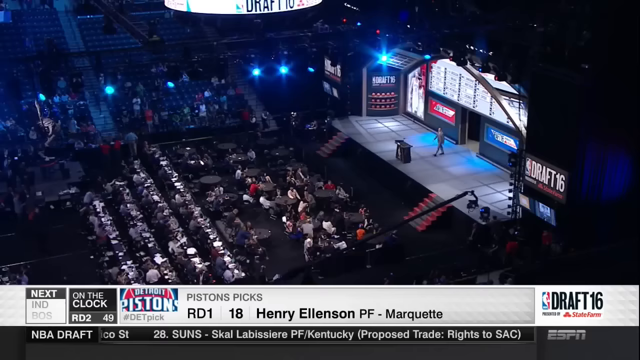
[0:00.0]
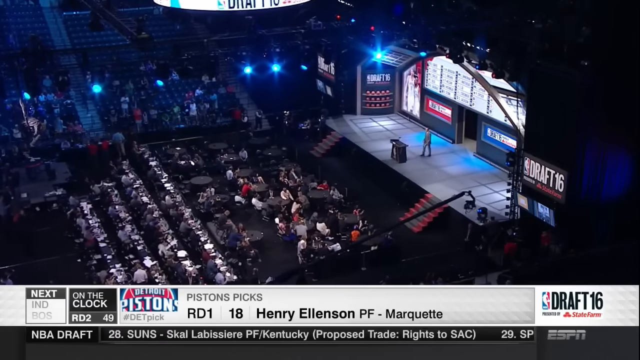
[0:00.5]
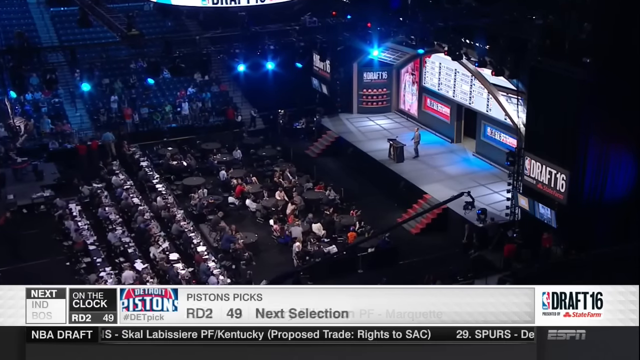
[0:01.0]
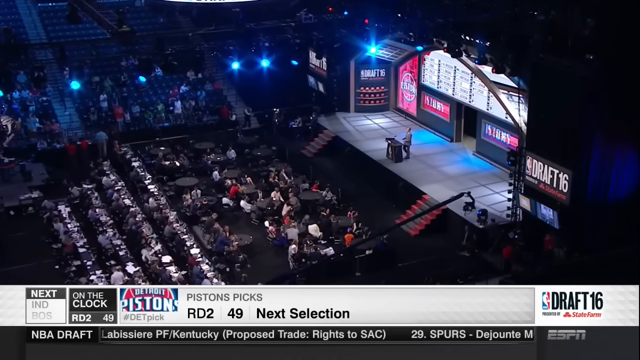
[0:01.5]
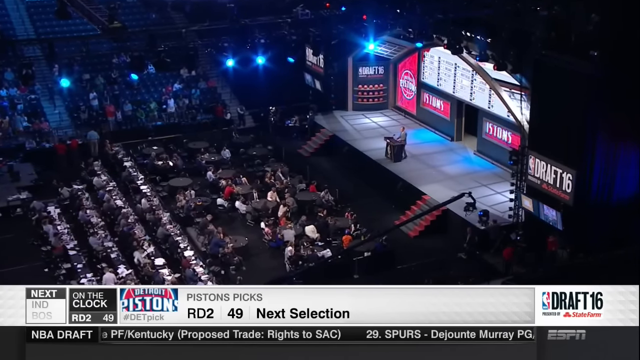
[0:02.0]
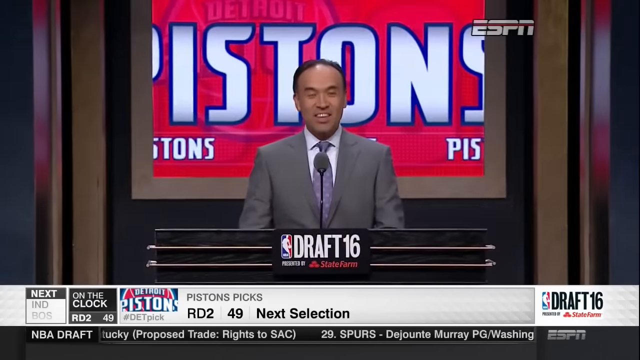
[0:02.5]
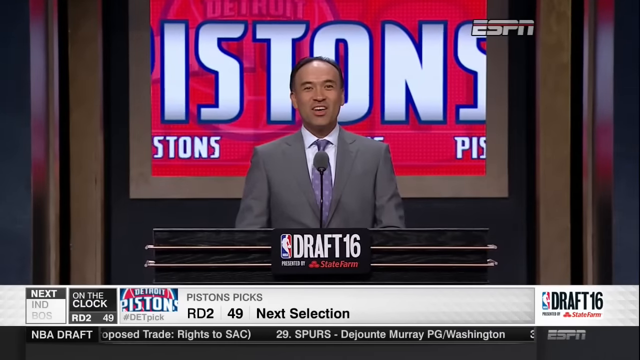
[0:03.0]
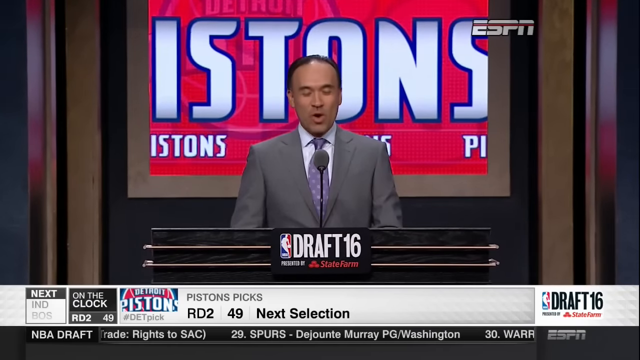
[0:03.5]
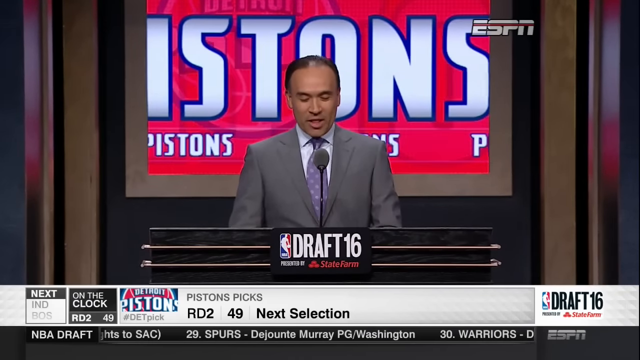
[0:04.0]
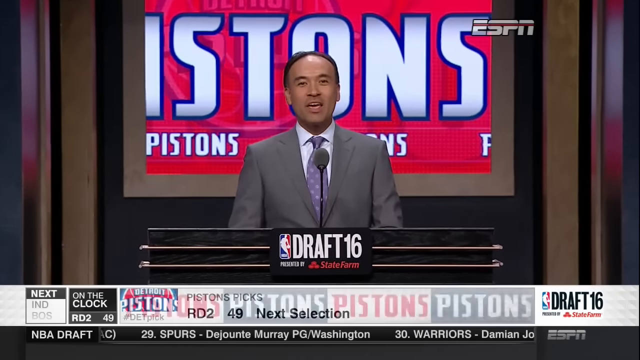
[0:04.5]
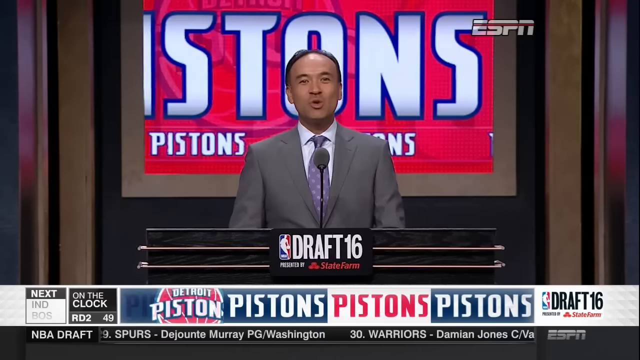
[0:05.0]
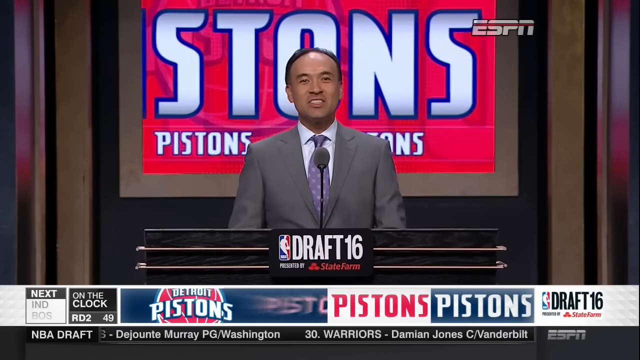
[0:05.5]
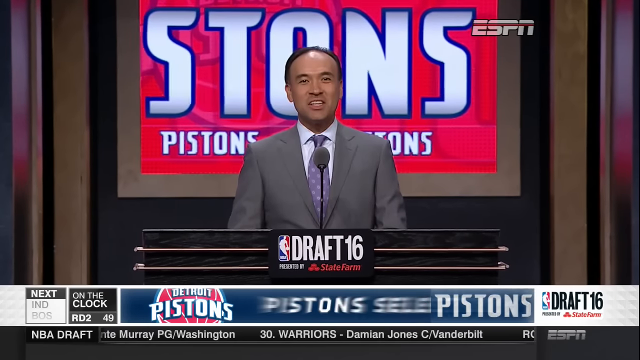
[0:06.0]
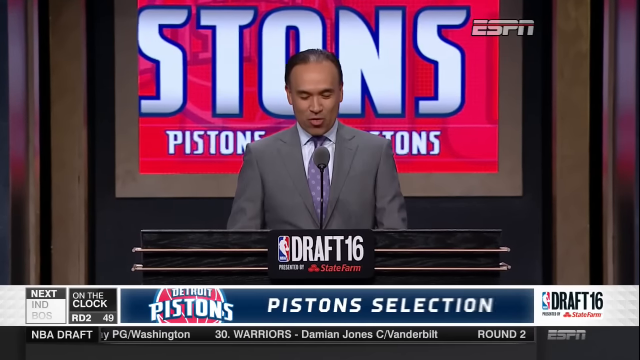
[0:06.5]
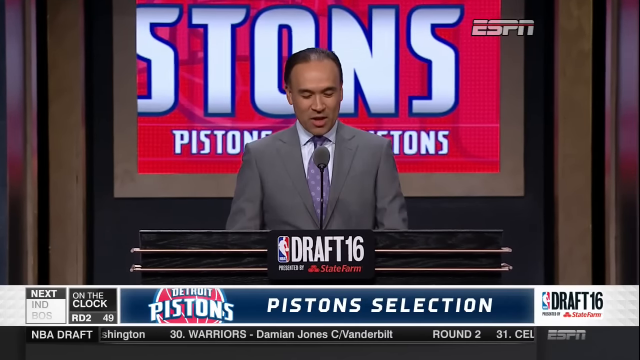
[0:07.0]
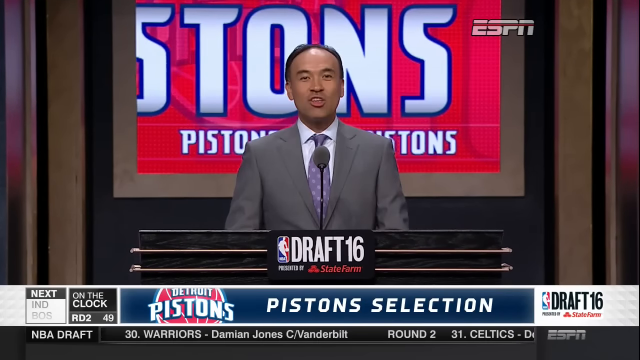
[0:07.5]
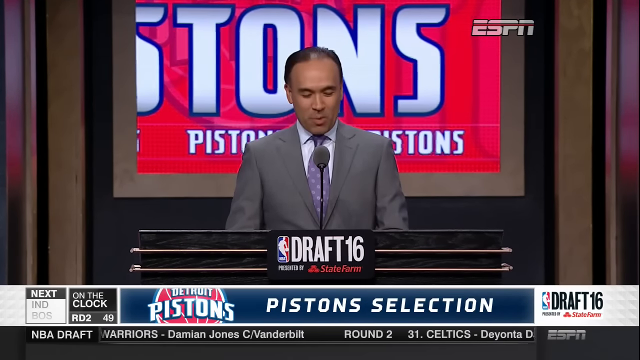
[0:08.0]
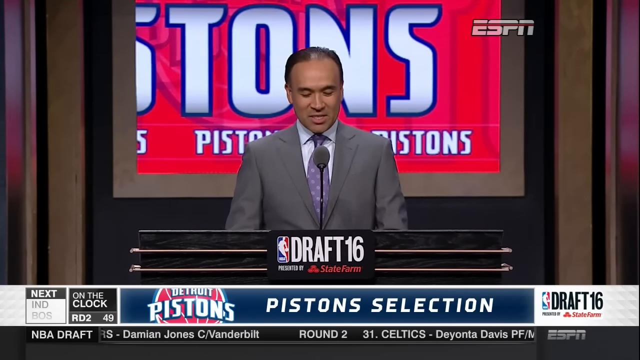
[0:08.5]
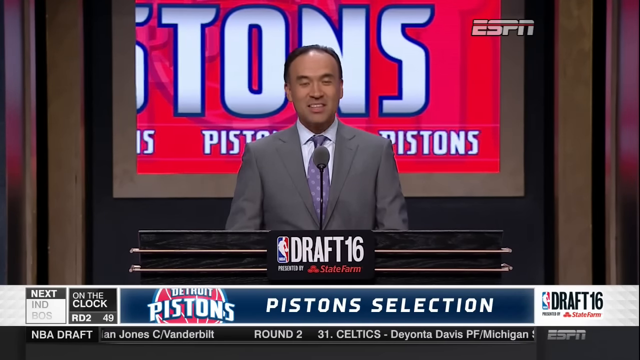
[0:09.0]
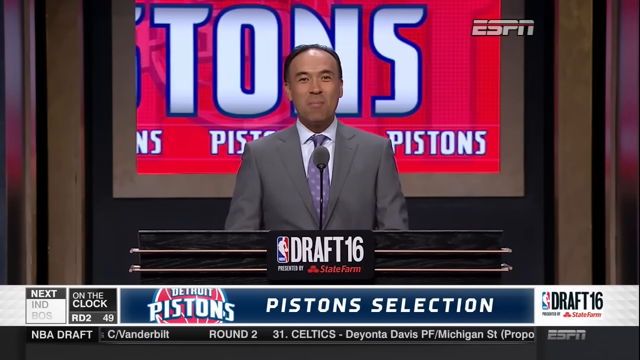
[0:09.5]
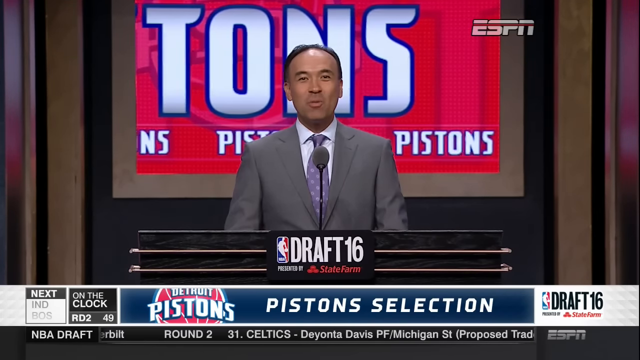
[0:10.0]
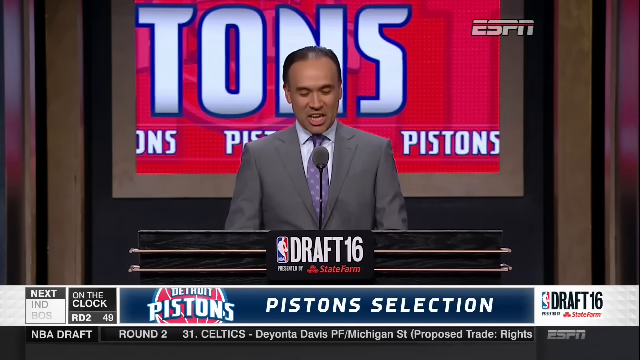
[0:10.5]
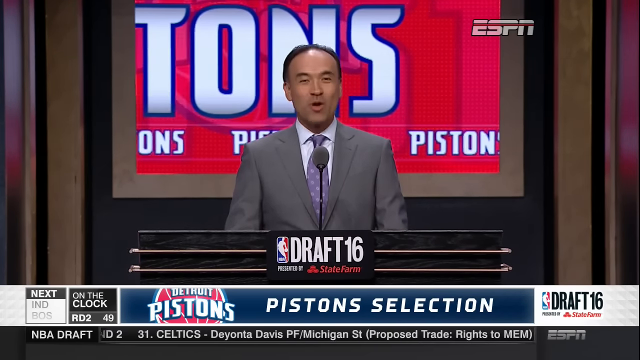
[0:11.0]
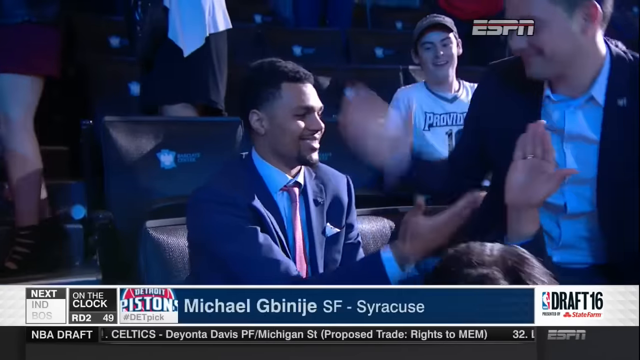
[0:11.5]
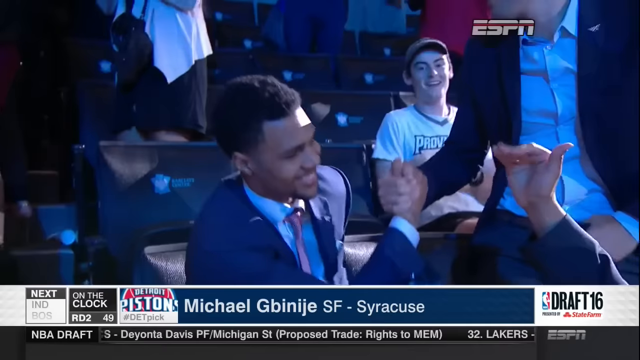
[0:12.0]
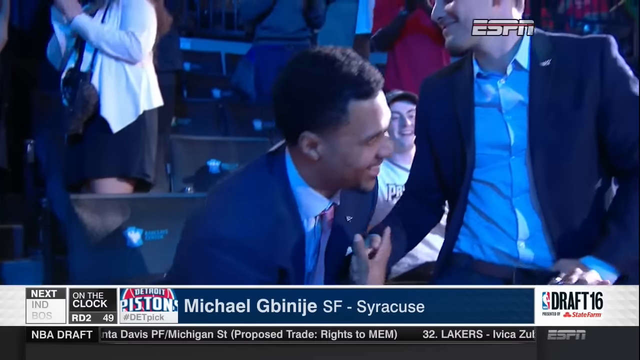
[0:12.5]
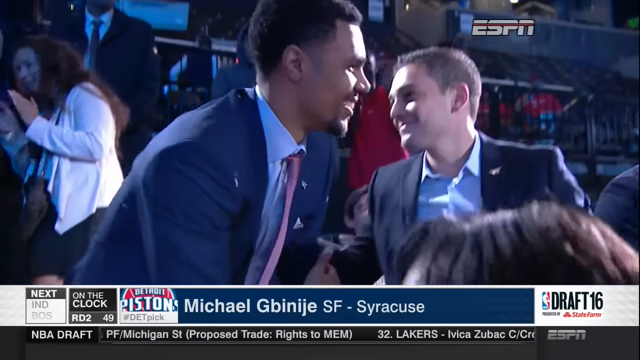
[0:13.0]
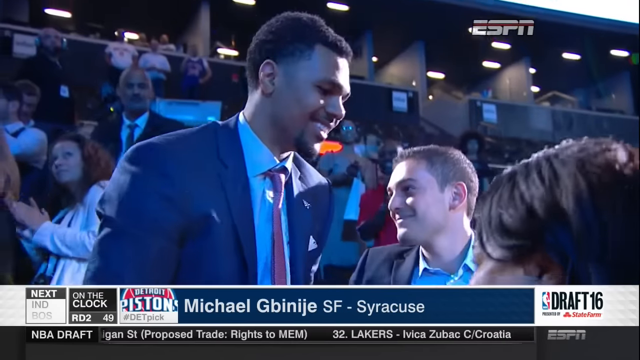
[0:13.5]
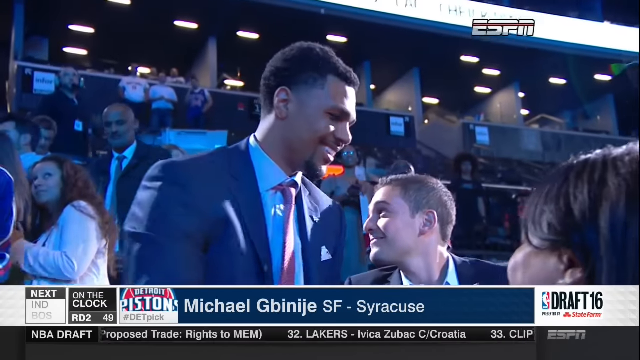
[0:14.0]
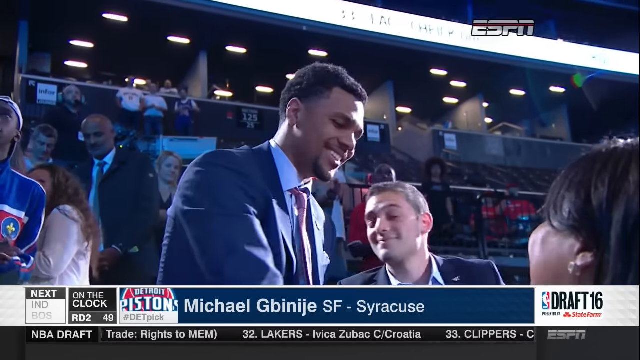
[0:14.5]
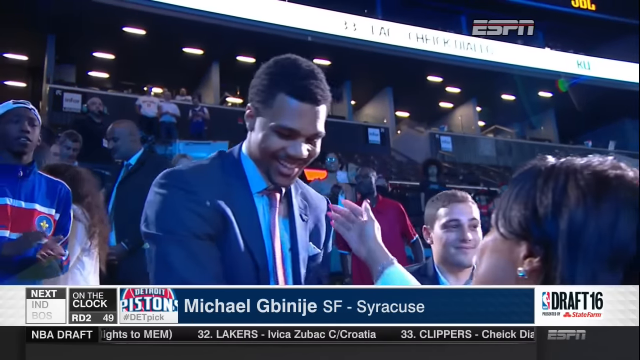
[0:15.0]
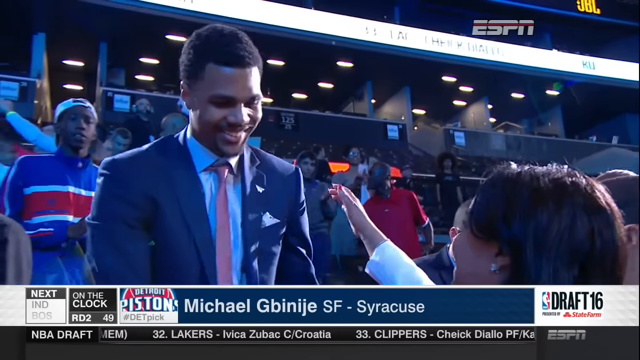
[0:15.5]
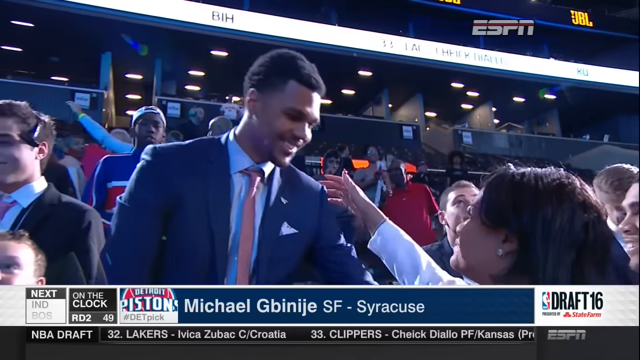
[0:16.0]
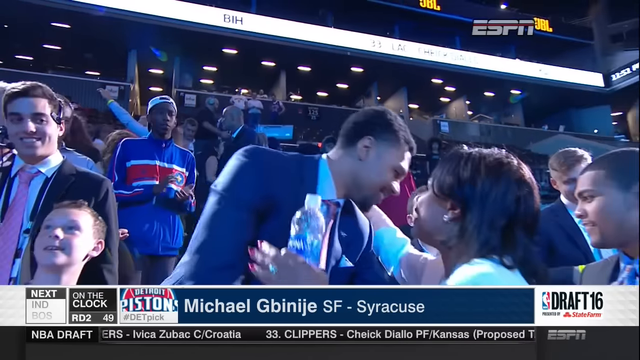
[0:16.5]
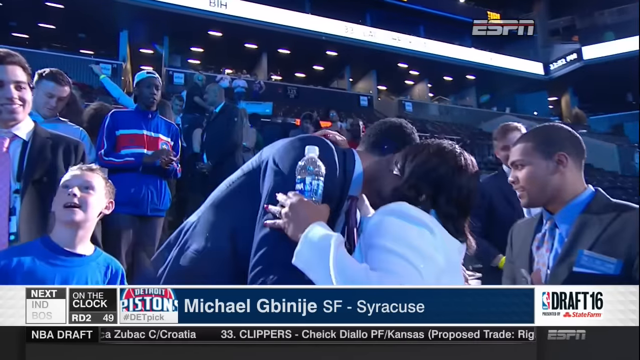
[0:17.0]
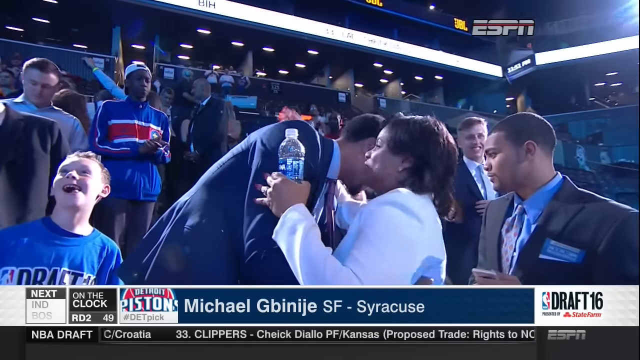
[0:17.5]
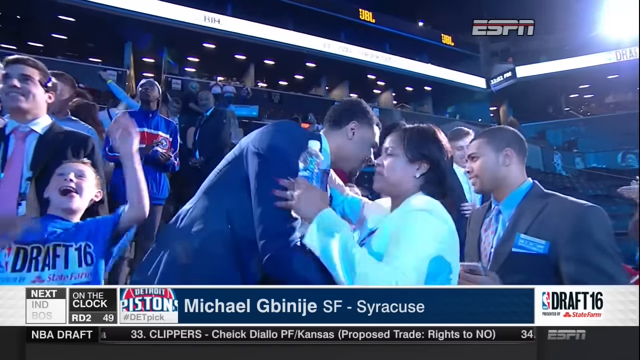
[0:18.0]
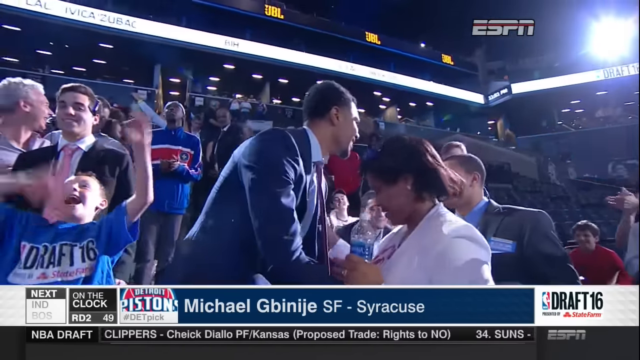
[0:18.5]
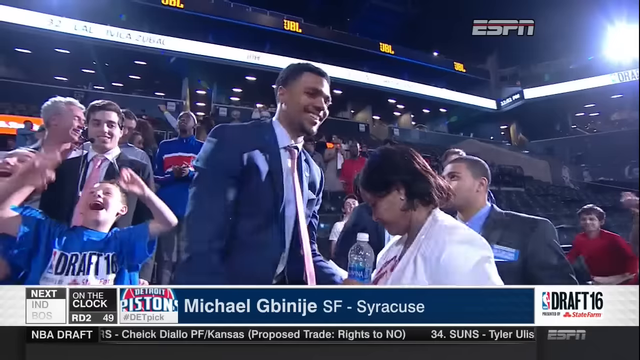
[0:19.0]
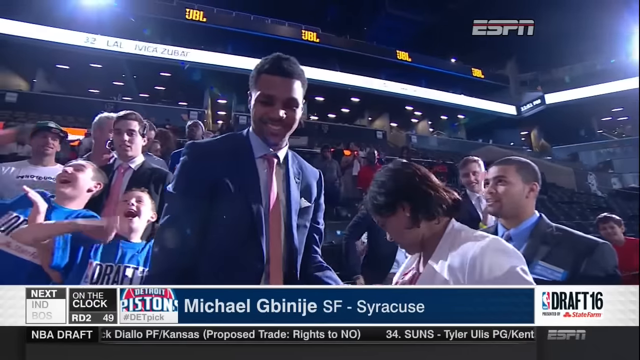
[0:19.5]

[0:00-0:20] On-screen text reads "draft", and a graphic at the bottom about the Pistons' picks shows the name Henry Ellenson, spelled E-L-L-E-N-S-O-N, with "PF" and a school spelled M-A-R-Q-U-E-T-T. In the lower right corner is the NBA symbol, half blue and half red with a basketball player in white outline, reading "NBA 16". Words scroll very fast across the bottom: "NBA draft", "30 Warriors Damien Jones C", an entry for the Celtics, "32 Lakers" and "33 Clippers". For the Pistons, a player named Michael is shown, with a last name beginning G-B-I-N, followed by "SF" and "Syracuse". He gets up; he wears a dark suit, possibly blue or black, what looks like a red or orange tie, and a white button-down shirt. "ESPN" appears in the upper right corner.